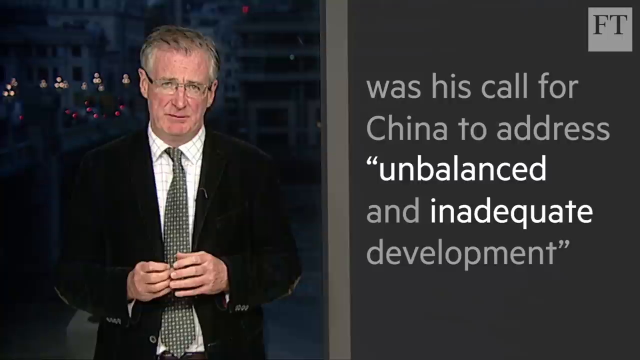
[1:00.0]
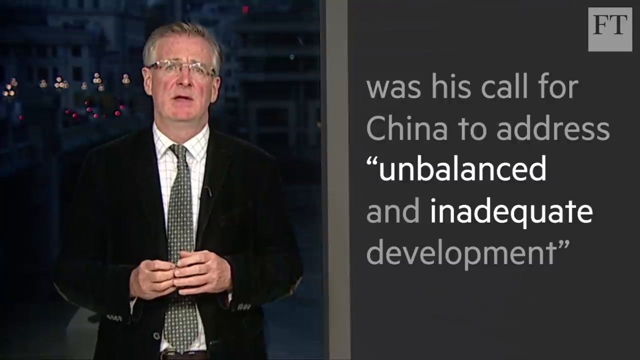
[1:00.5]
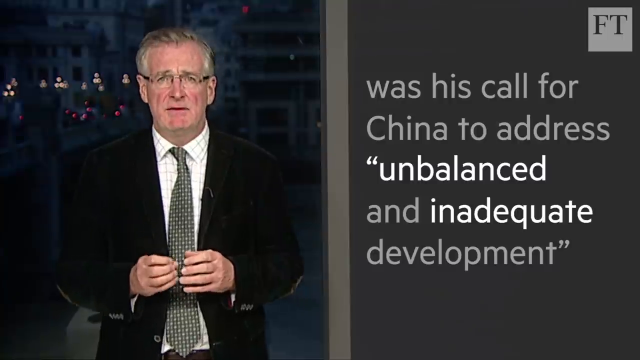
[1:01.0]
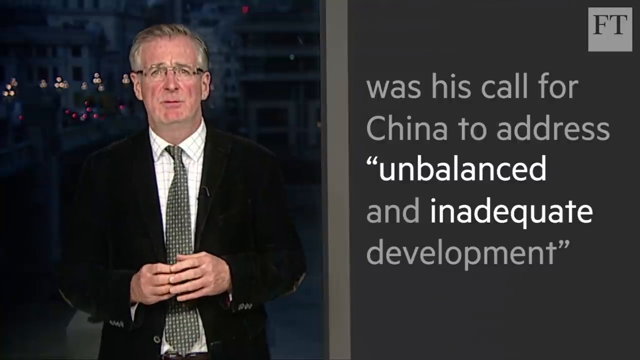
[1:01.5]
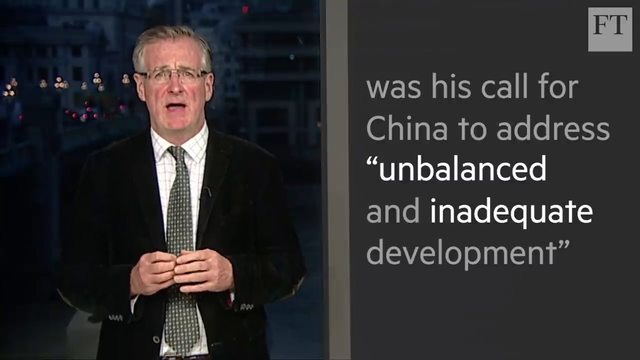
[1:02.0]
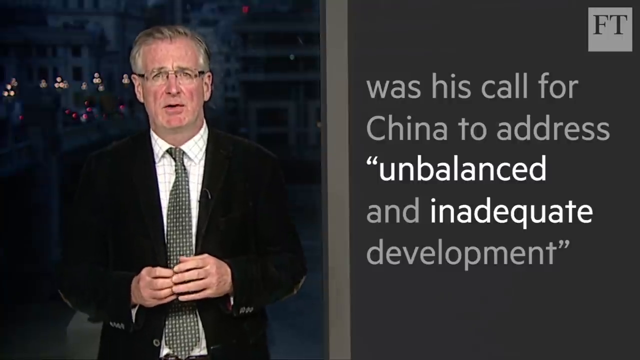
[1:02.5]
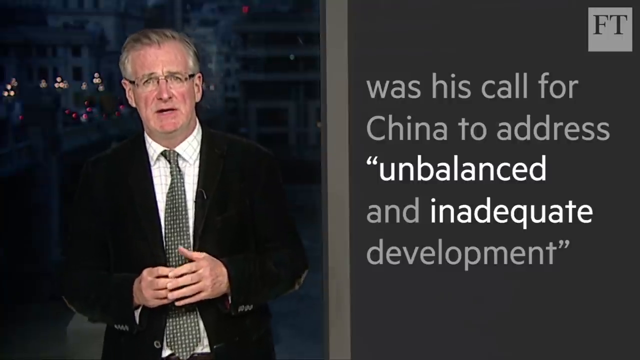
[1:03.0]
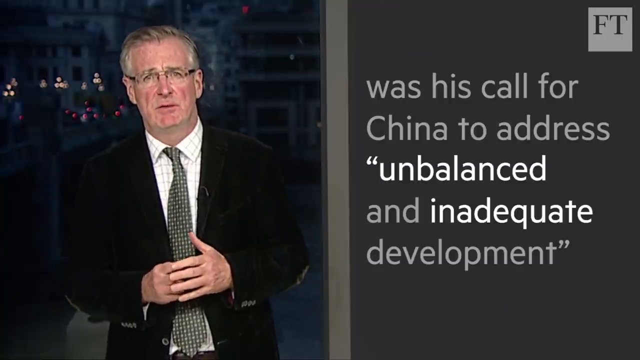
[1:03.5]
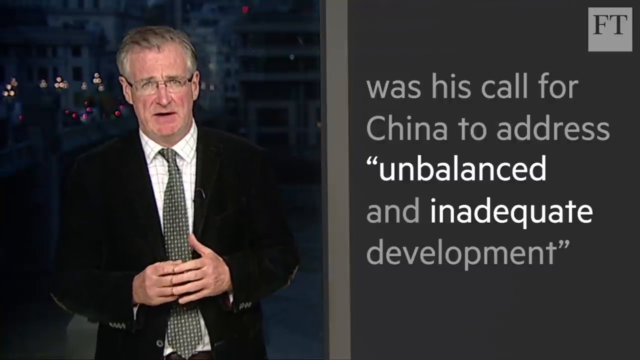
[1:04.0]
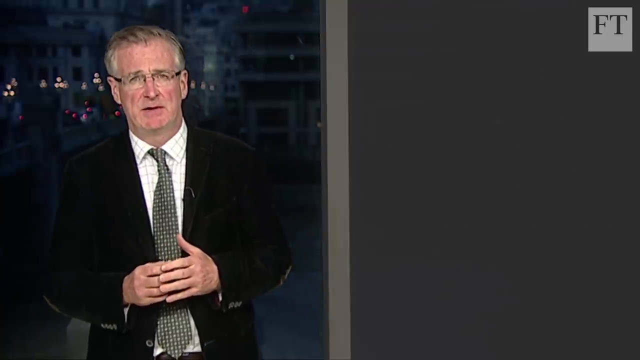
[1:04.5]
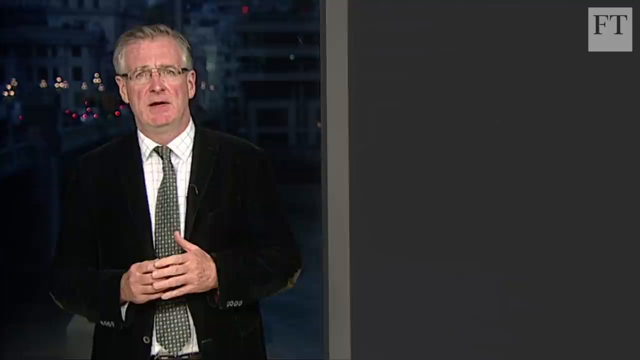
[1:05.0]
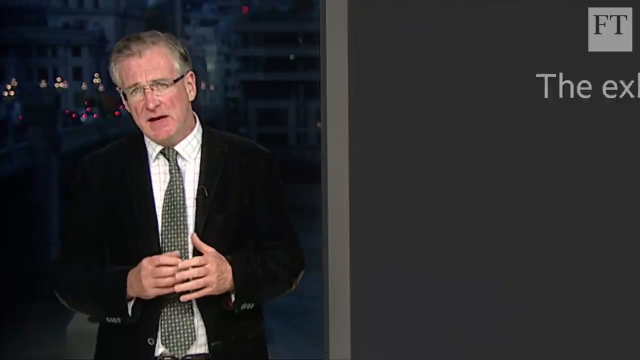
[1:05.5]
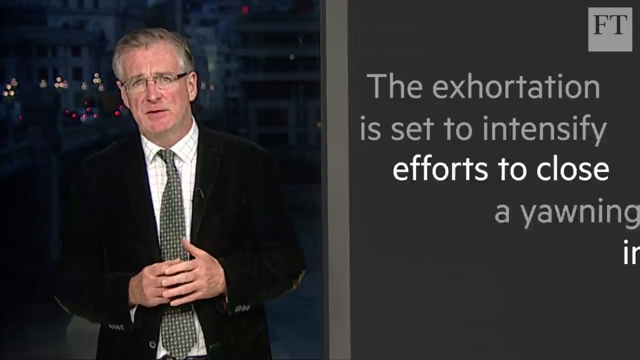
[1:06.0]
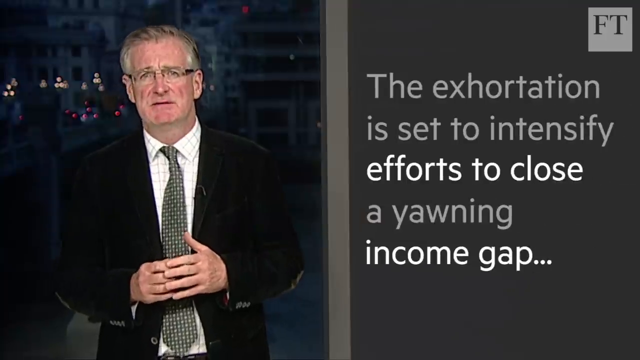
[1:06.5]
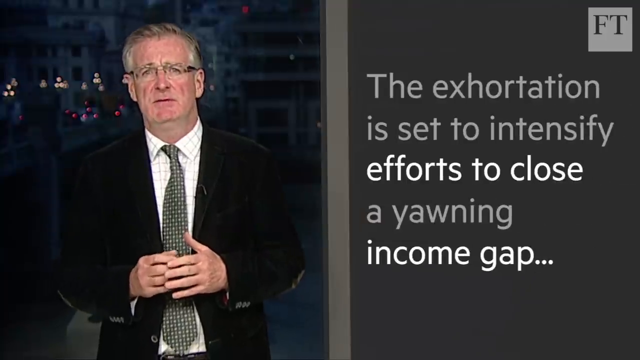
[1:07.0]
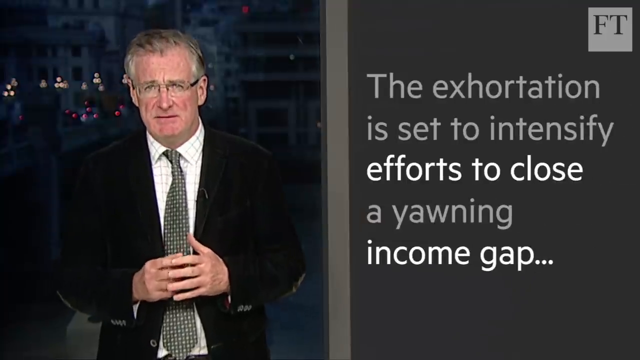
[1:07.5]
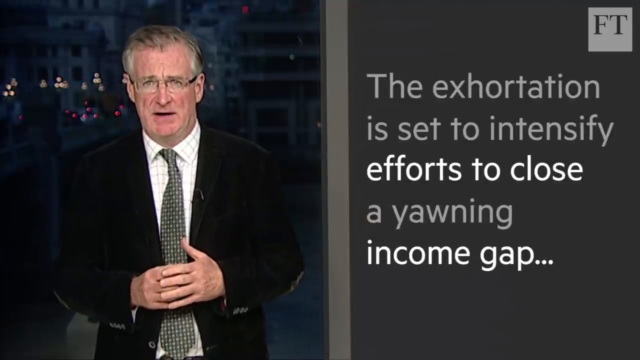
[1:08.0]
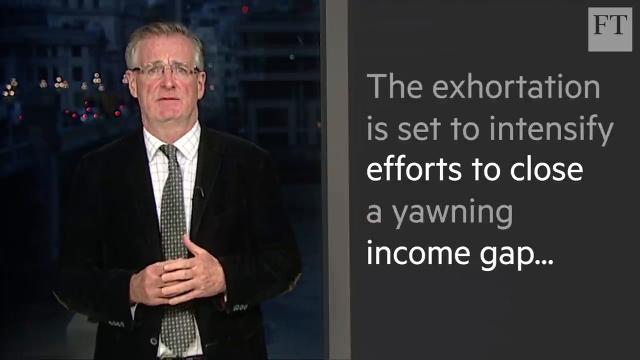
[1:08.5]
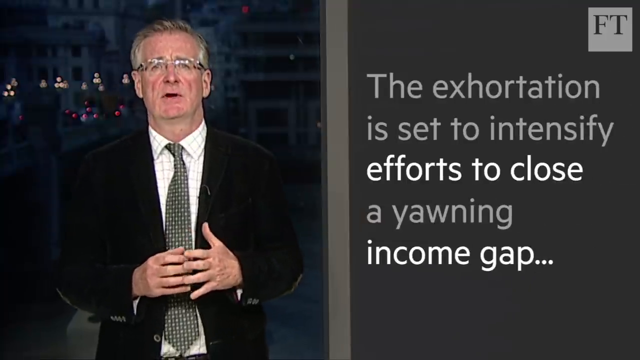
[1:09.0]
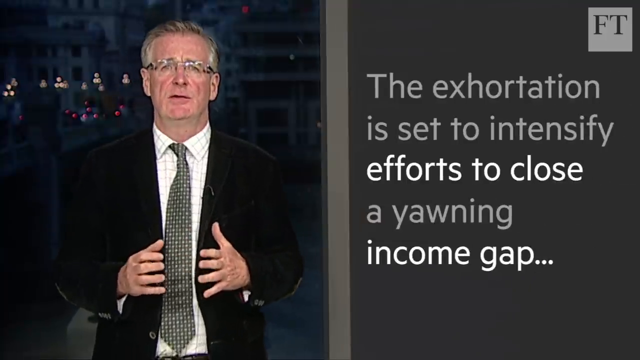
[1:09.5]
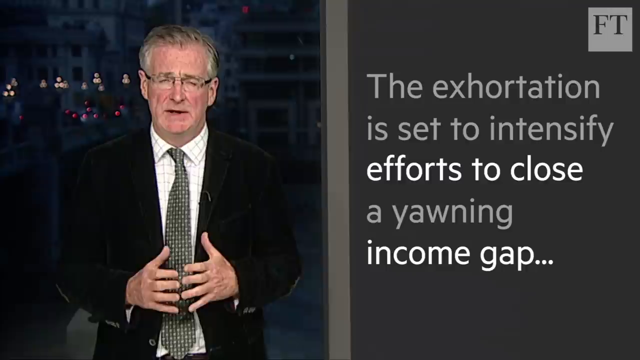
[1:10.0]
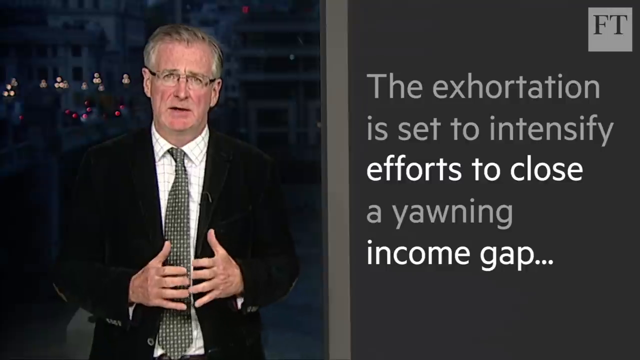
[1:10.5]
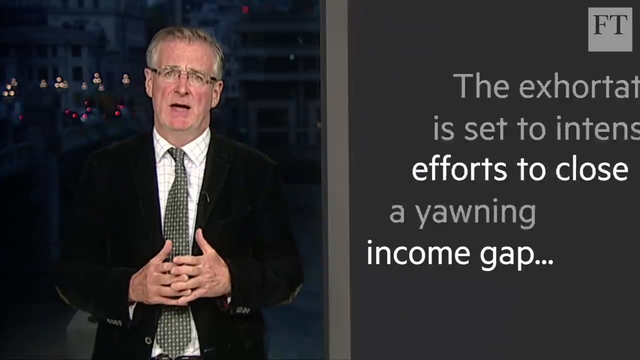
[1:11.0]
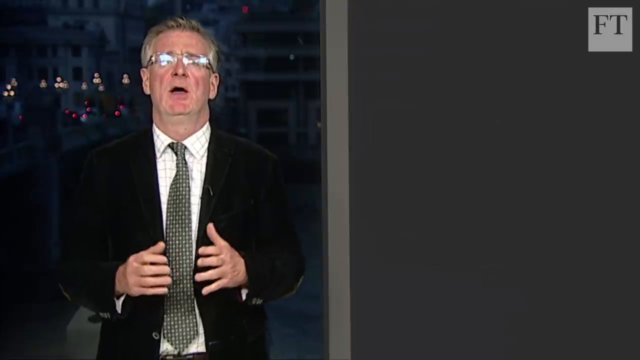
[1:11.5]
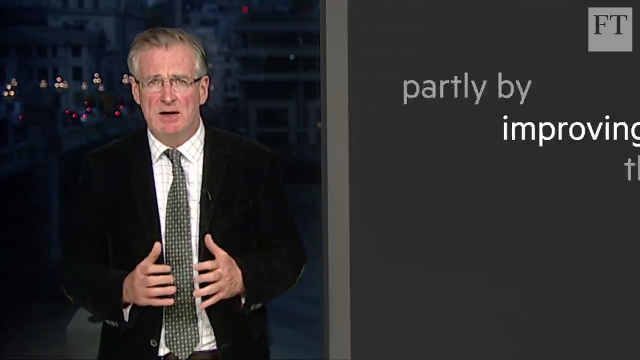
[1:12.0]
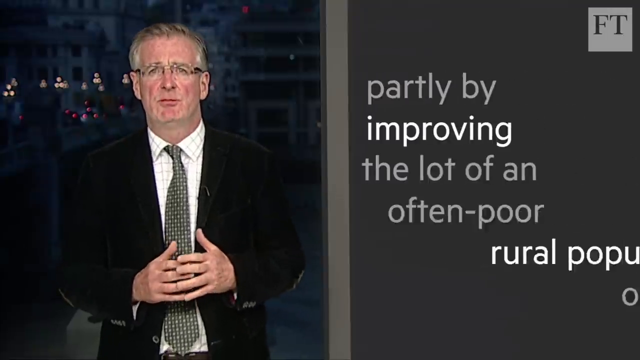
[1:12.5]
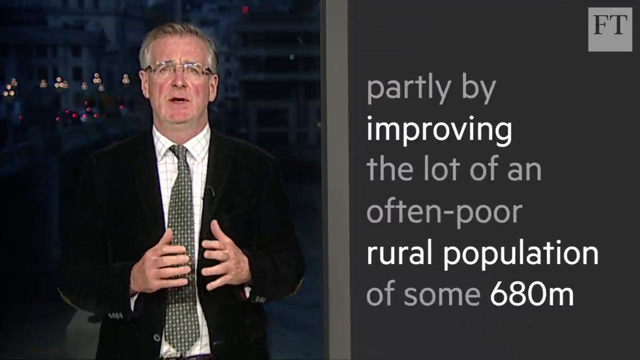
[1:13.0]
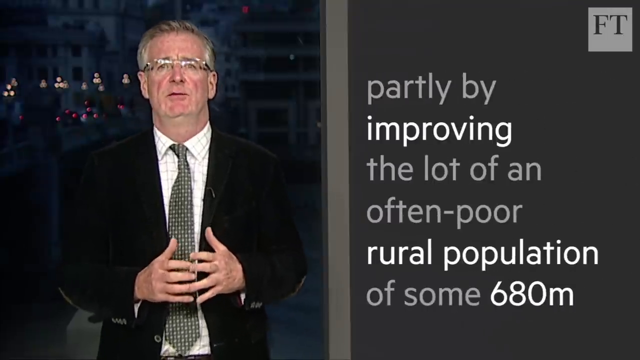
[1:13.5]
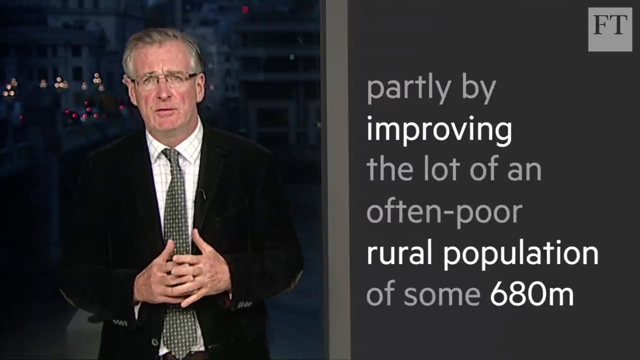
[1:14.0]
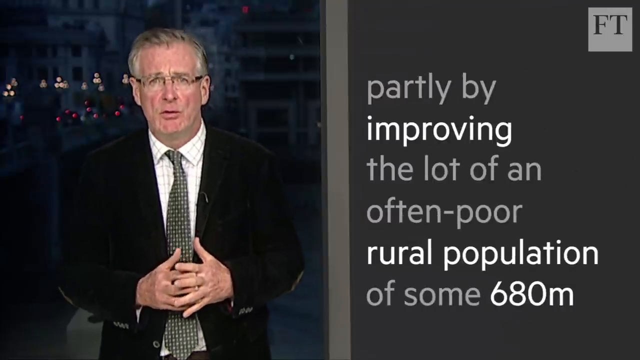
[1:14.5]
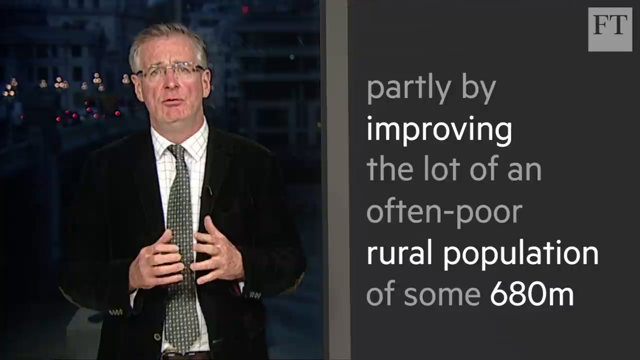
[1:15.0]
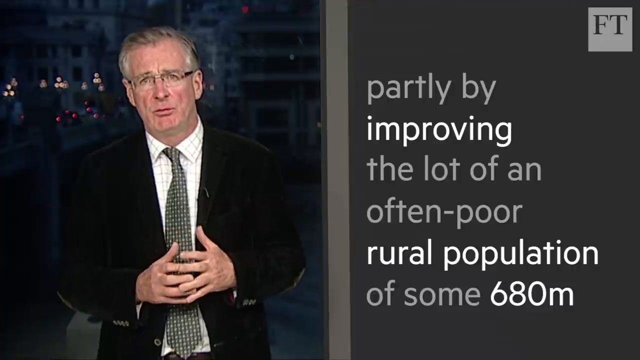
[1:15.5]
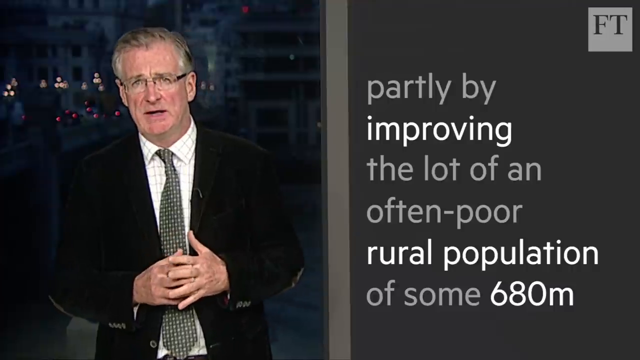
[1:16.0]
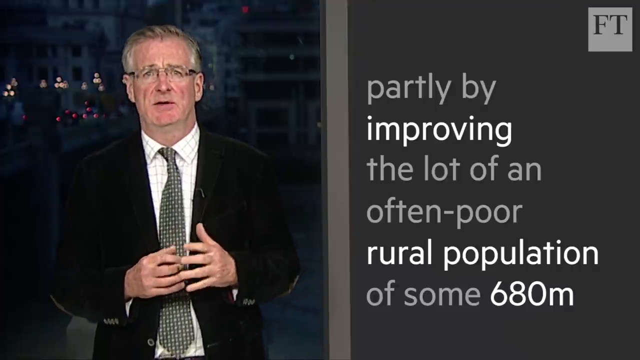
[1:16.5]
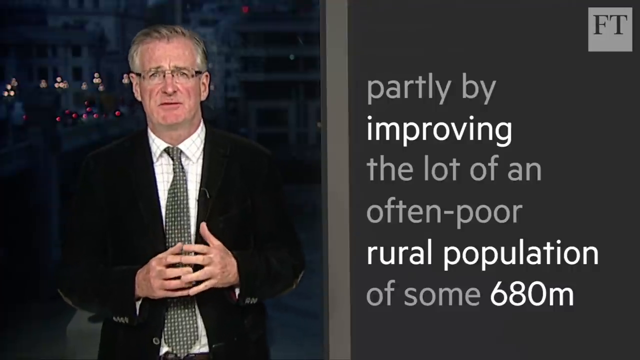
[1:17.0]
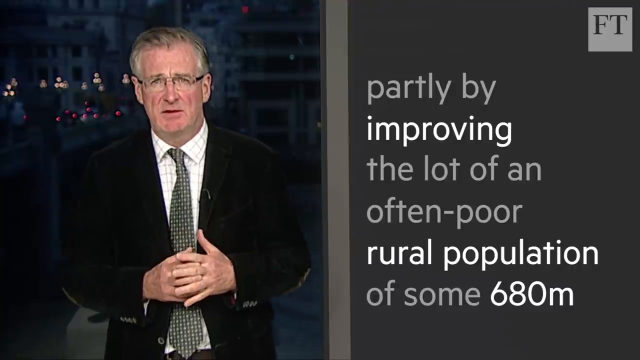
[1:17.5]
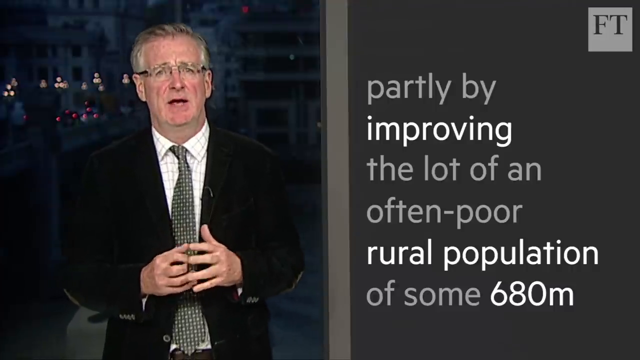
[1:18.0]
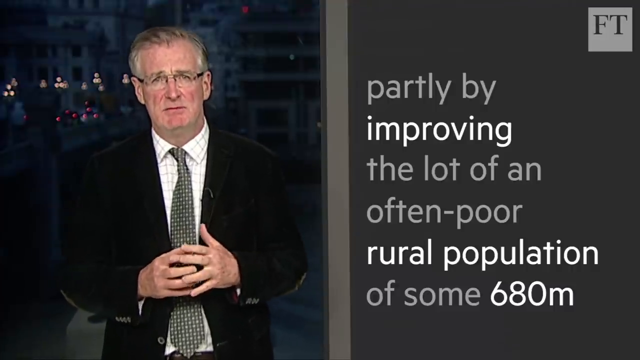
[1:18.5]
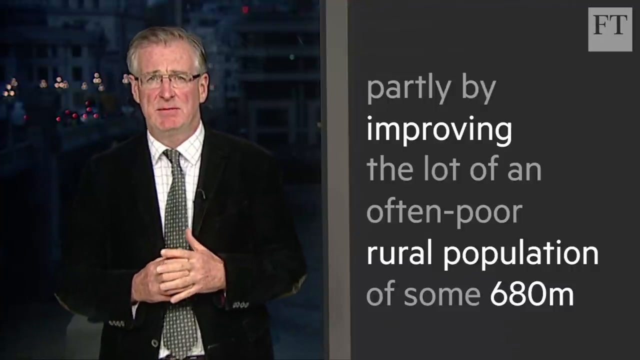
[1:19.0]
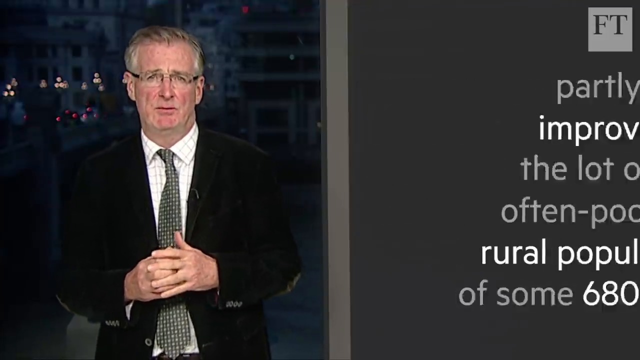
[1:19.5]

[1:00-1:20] The speaker stands on the left-hand side of the screen in a dark jacket, a white check shirt and a dark gray patterned tie. He has graying hair receding at the hairline and wears wire-rimmed glasses, standing with his hands in front of him and using them to emphasize his words. In the upper right of the screen are the initials "FT" in dark gray against a small lighter gray square. The text box opens reading "was his call for China to address unbalanced and inadequate development." It then changes to "The exhortation is set to intensify efforts to close a yawning income gap." The screen changes again to a new text box: "Partly by improving the lot of an often poor rural population of some 680 million." The text box then changes and stops in the middle of the phrase.